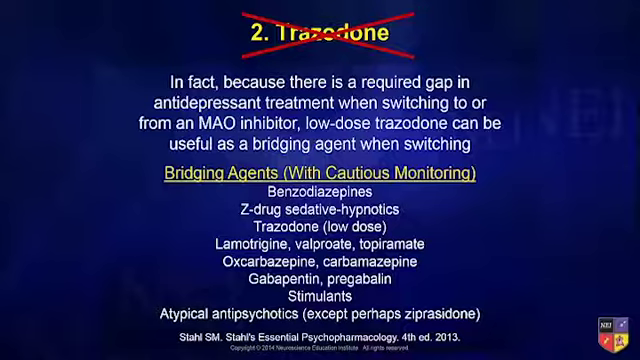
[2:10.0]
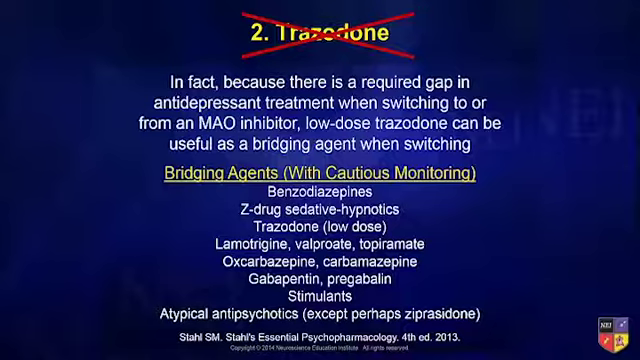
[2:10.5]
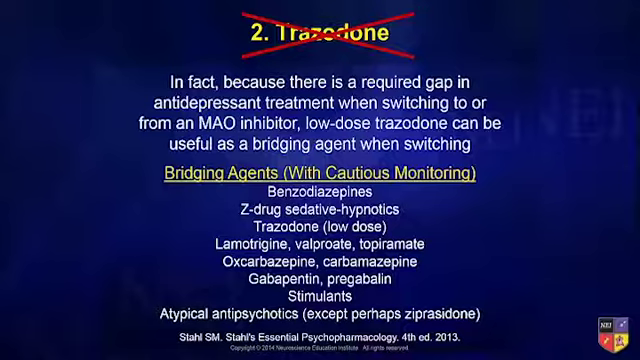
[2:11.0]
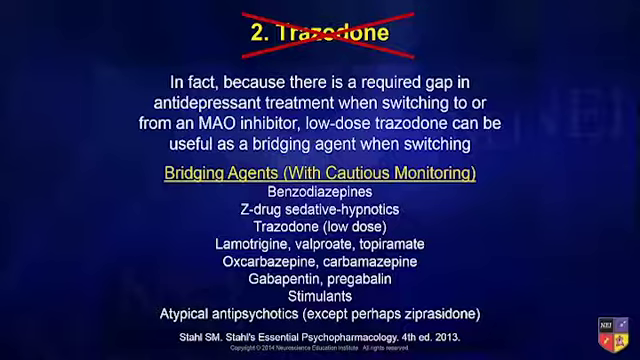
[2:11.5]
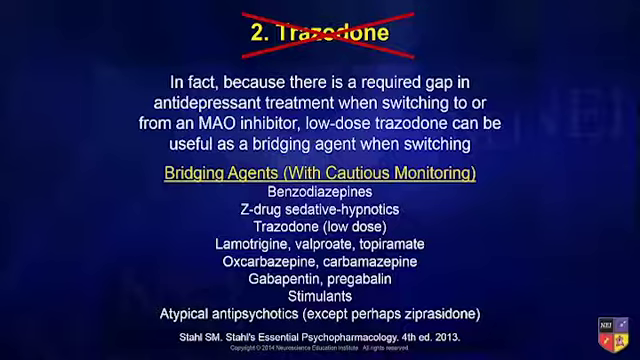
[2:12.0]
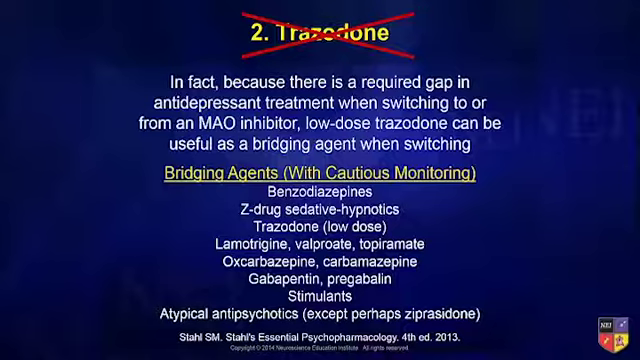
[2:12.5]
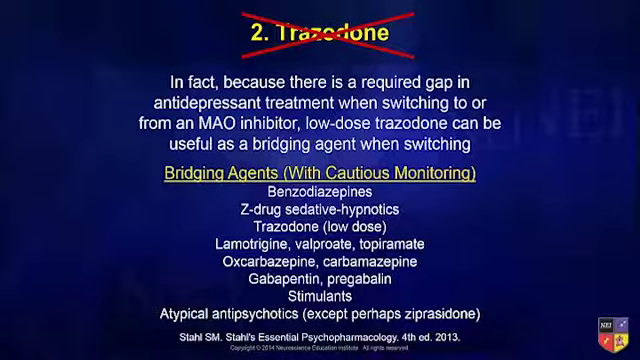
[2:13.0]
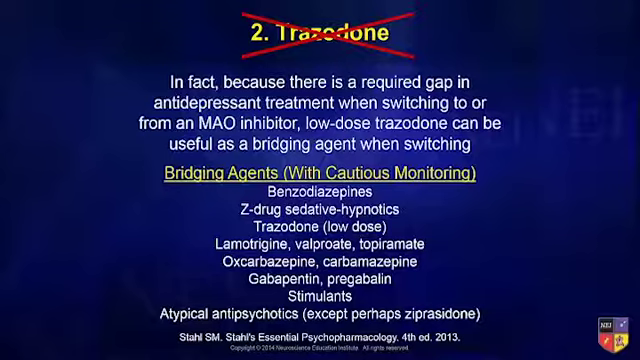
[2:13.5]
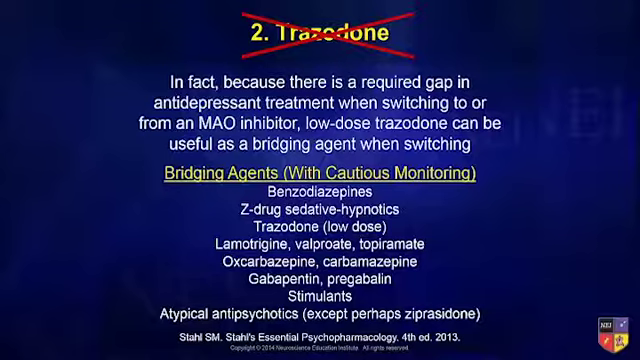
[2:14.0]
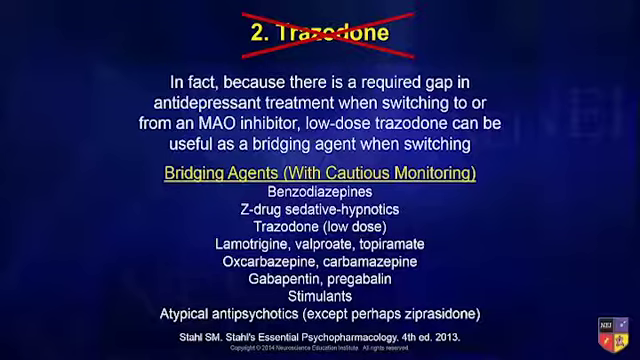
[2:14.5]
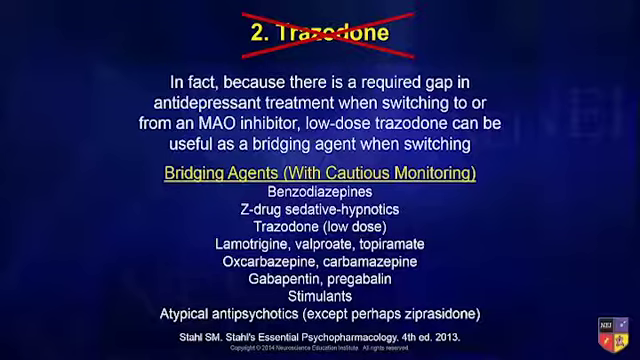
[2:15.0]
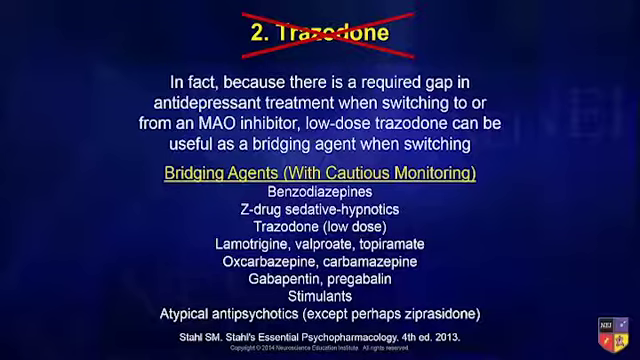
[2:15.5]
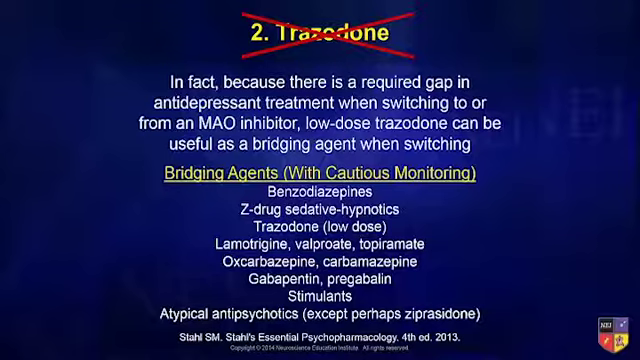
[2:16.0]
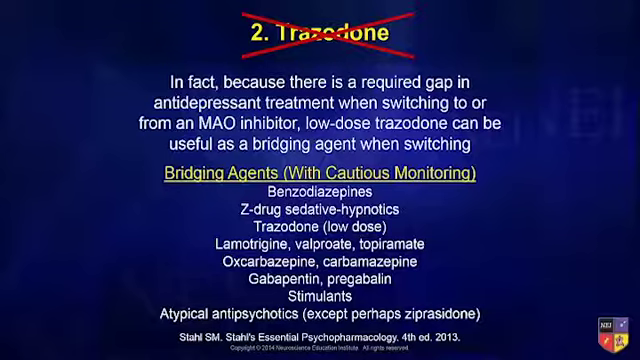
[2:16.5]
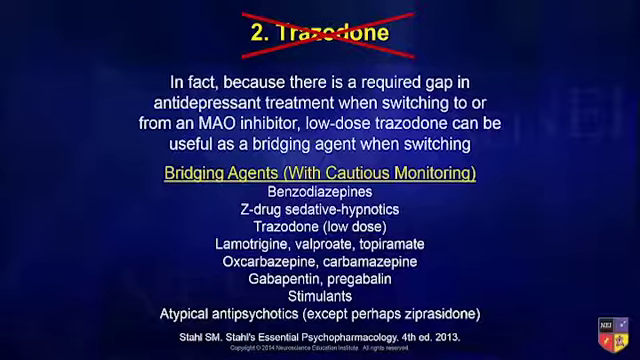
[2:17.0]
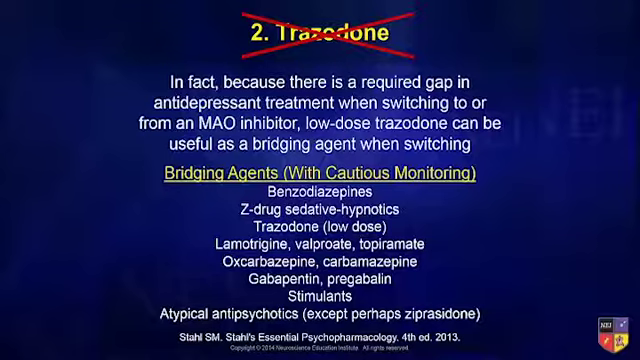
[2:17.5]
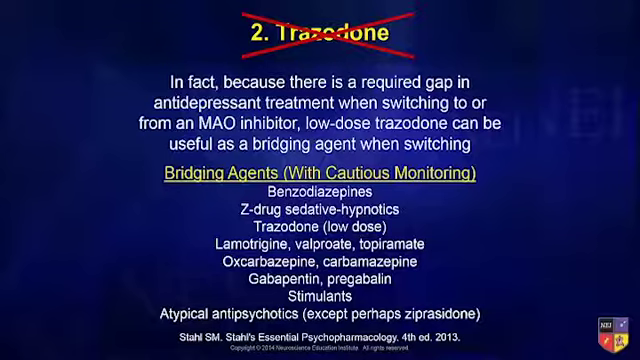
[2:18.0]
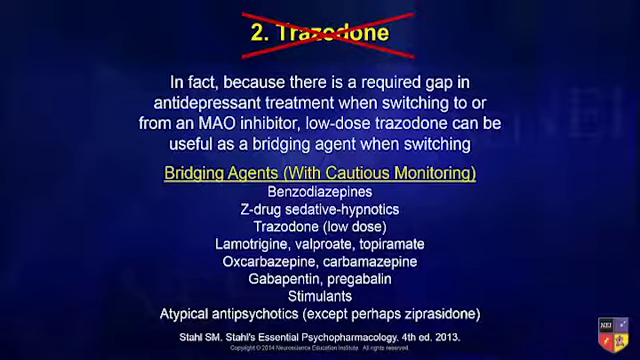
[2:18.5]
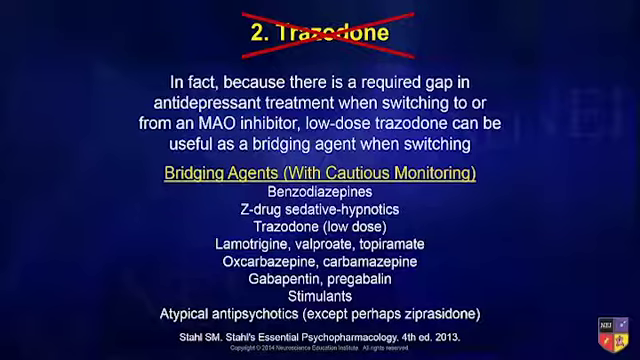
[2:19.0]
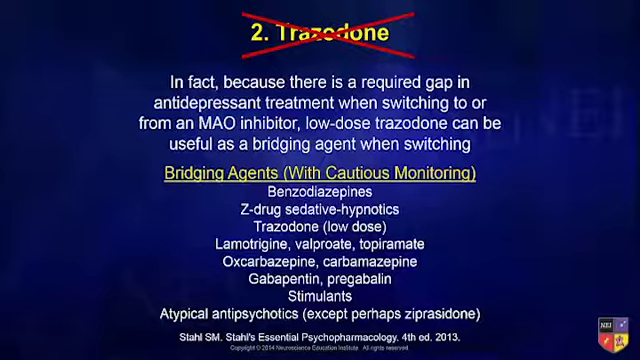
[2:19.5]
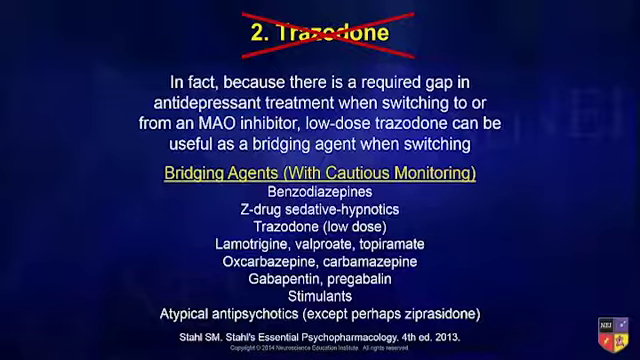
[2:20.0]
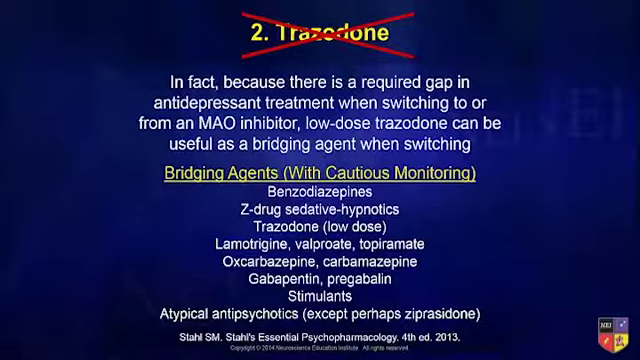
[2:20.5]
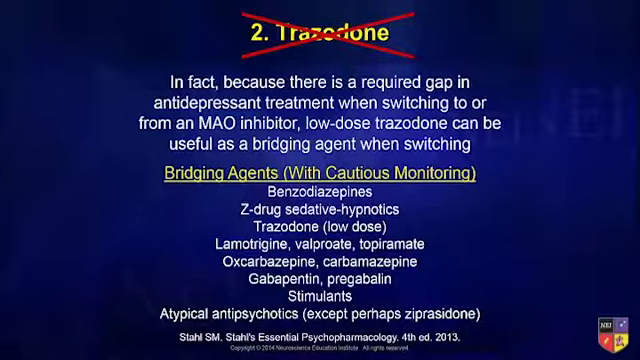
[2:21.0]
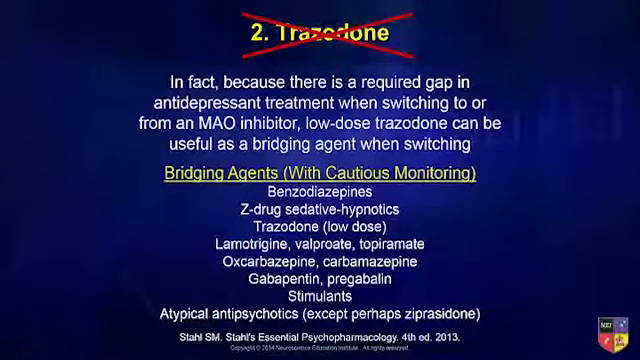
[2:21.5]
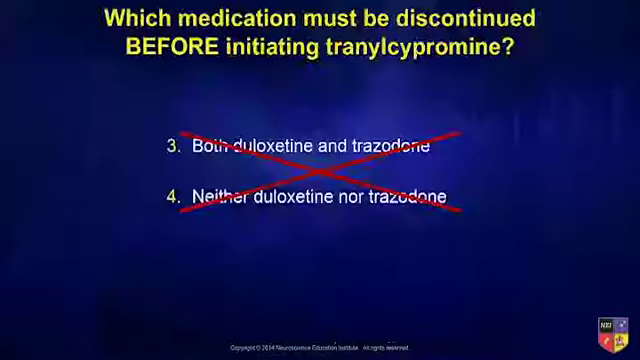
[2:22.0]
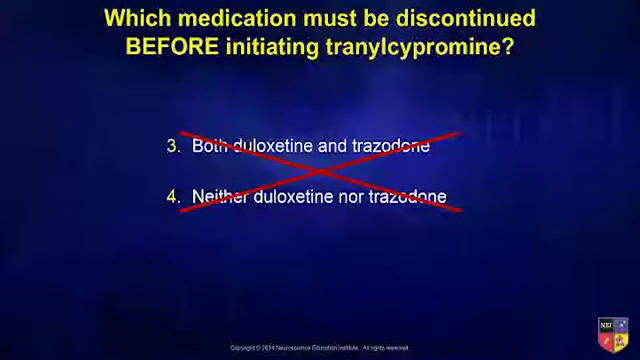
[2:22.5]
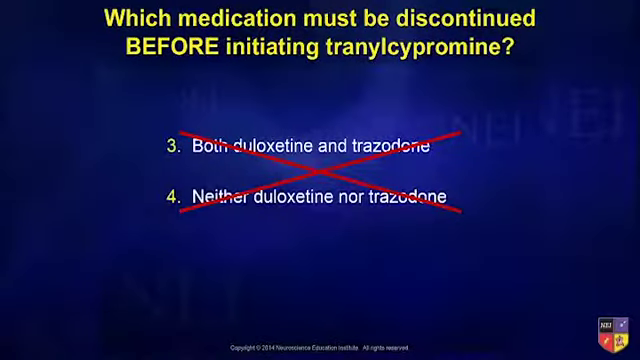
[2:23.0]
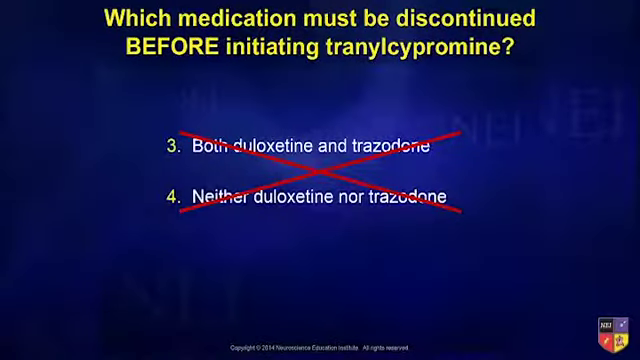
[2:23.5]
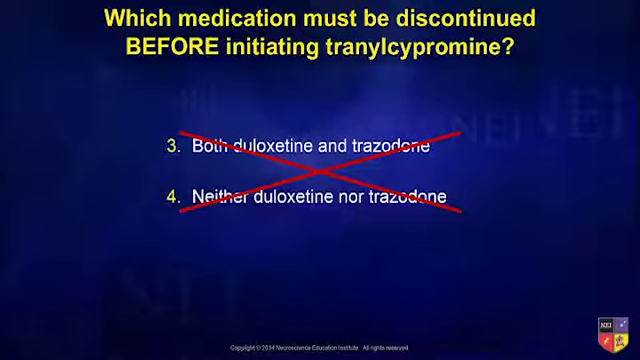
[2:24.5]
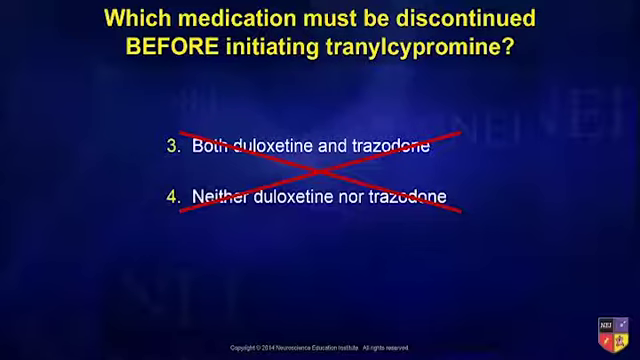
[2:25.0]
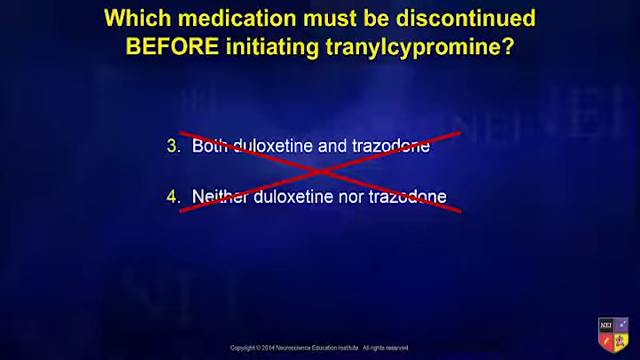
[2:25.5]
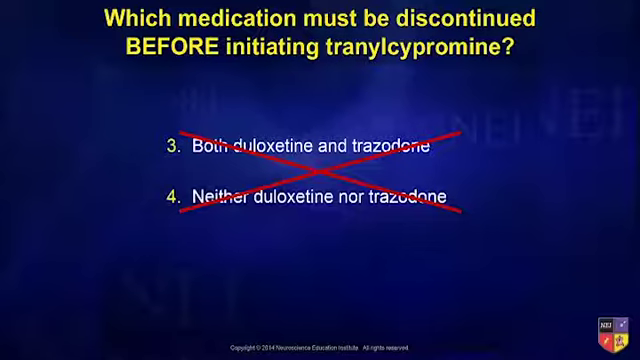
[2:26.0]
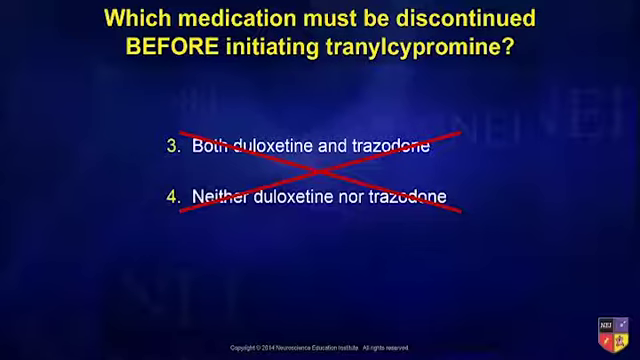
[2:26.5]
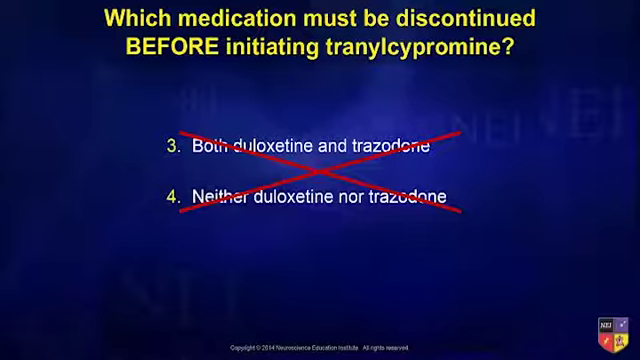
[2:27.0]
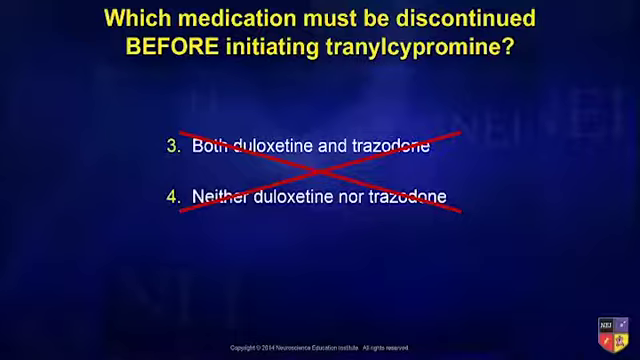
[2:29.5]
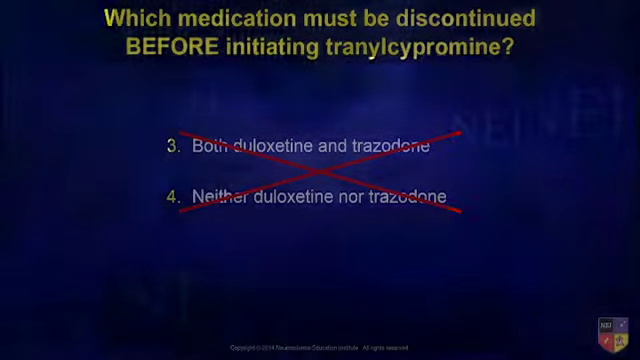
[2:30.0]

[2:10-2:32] The blue background shows yellow text at the top reading "2 Trazodone" with a red cross through it, the white explanation underneath, underlined yellow text reading "bridging agents with cautious monitoring", and the nine rows listing 12 bridging agents, with the citation in smaller white text at the very bottom. The video then transitions to a new screen with the same blue background and yellow text at the top reading "which medication must be discontinued before initiating tranylcypromine". Below are the numbers 3 and 4 in yellow, with white text beside 3 reading "both duloxetine and trazodone" and beside 4 reading "neither duloxetine nor trazodone". A large, thin red cross goes through the text of both options 3 and 4, marking them as incorrect answers. The video then fades to black.